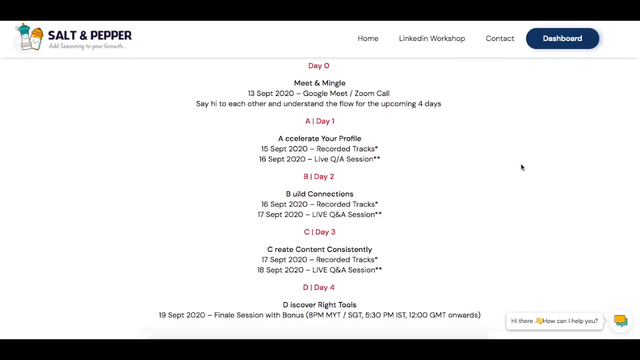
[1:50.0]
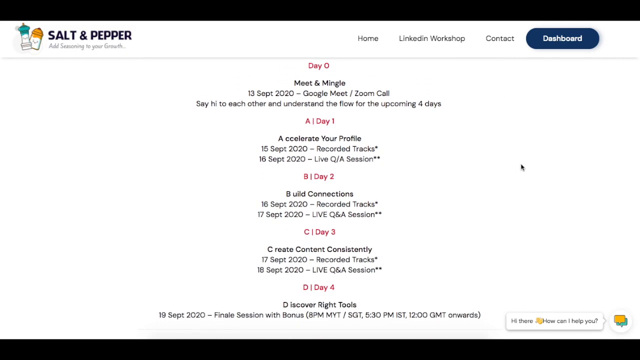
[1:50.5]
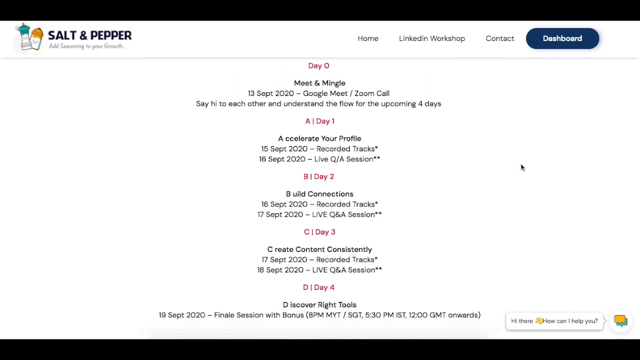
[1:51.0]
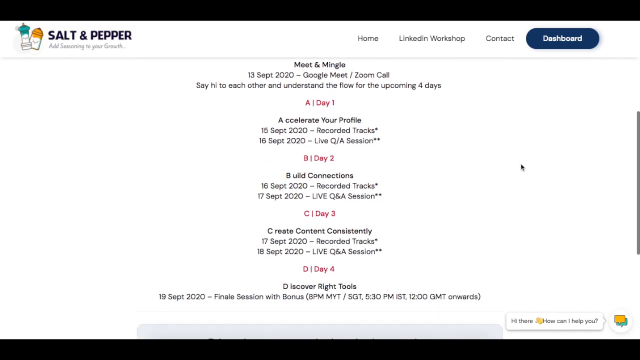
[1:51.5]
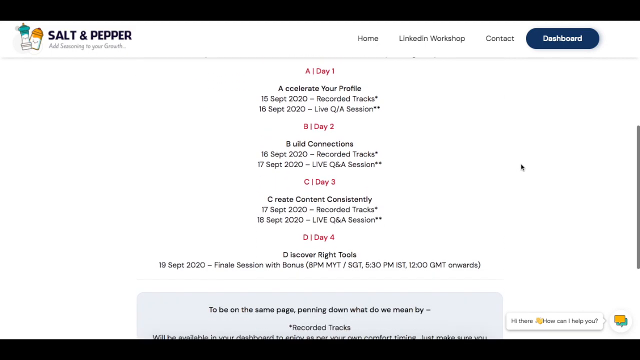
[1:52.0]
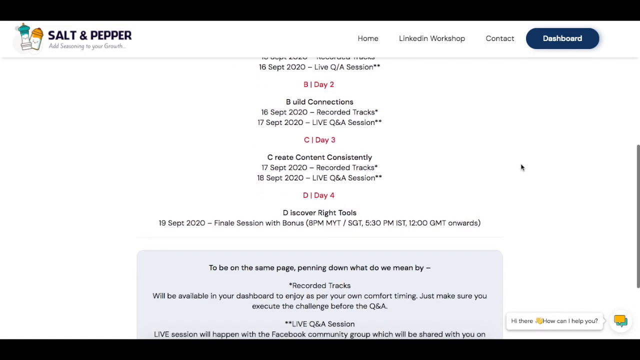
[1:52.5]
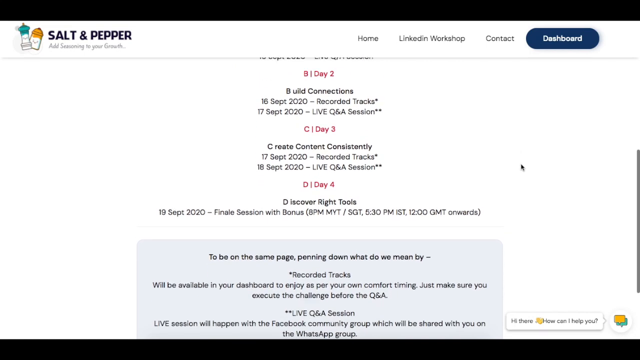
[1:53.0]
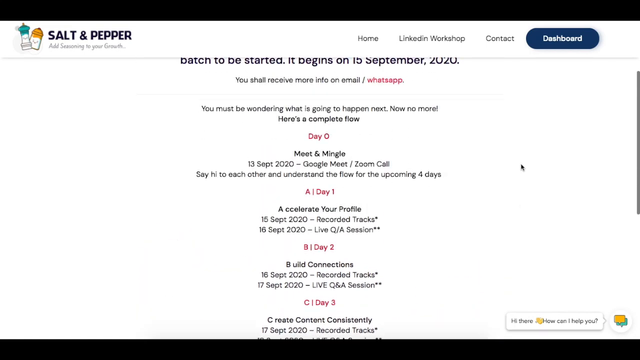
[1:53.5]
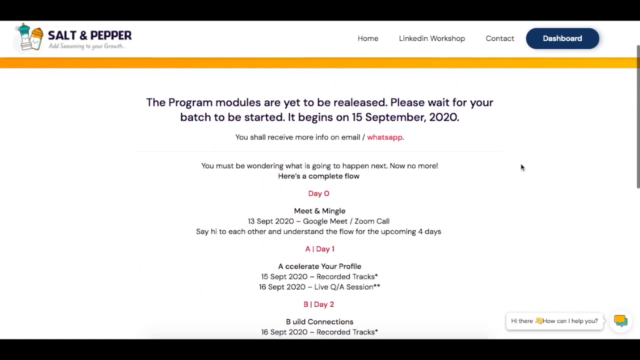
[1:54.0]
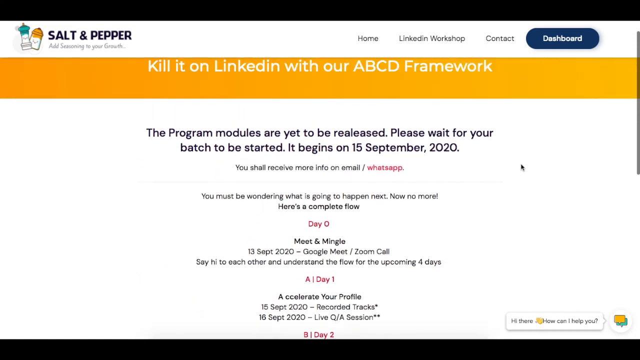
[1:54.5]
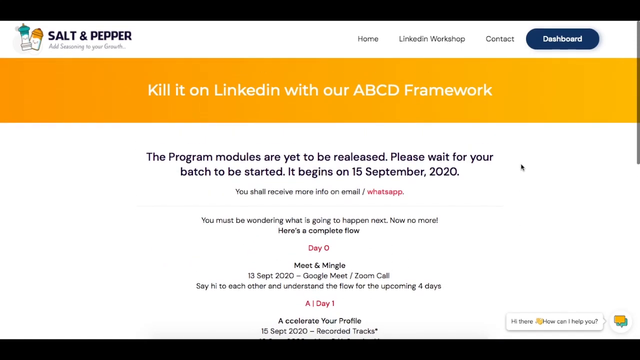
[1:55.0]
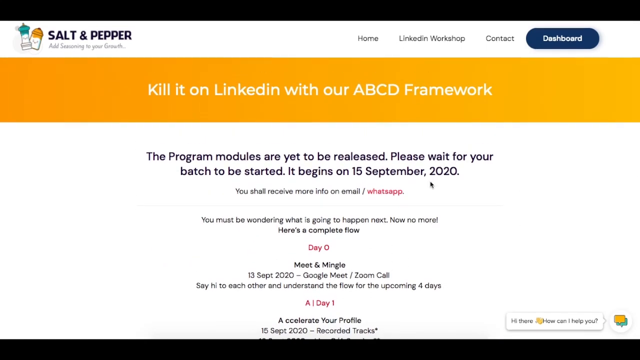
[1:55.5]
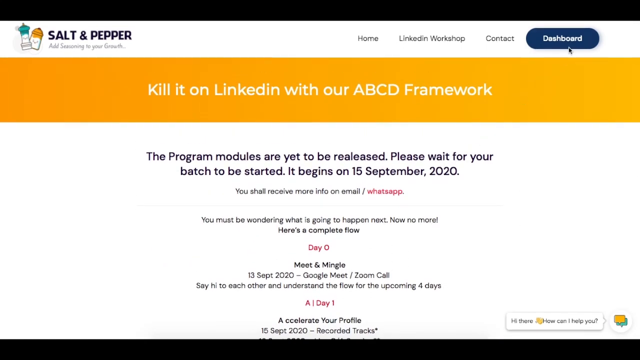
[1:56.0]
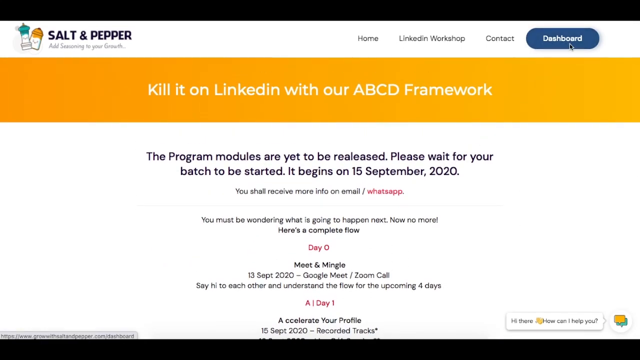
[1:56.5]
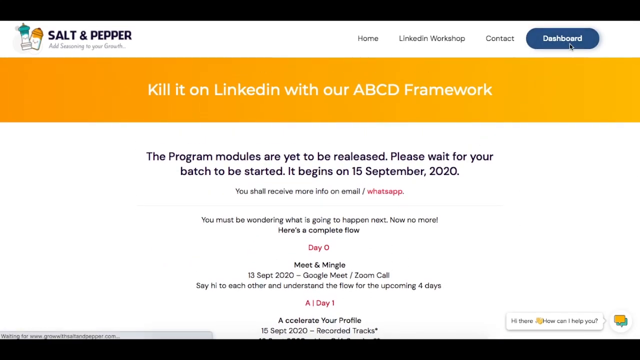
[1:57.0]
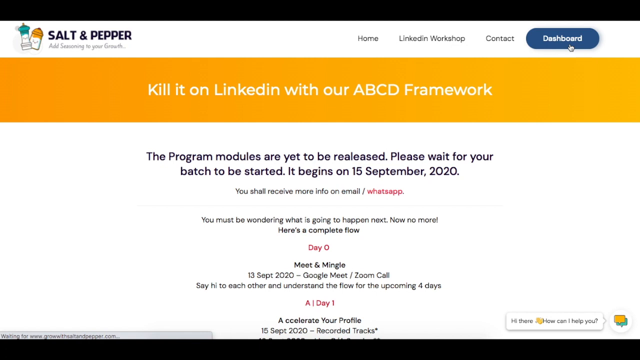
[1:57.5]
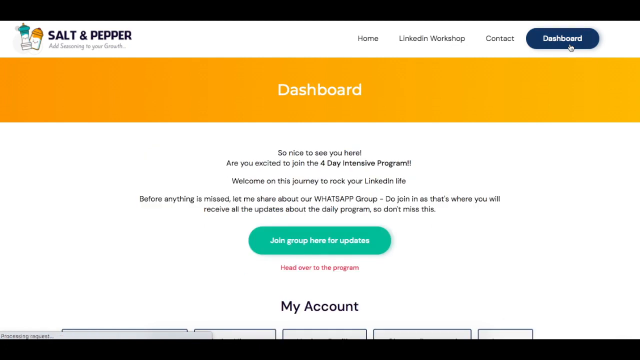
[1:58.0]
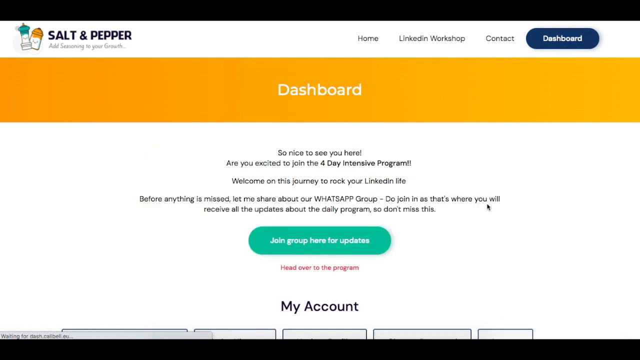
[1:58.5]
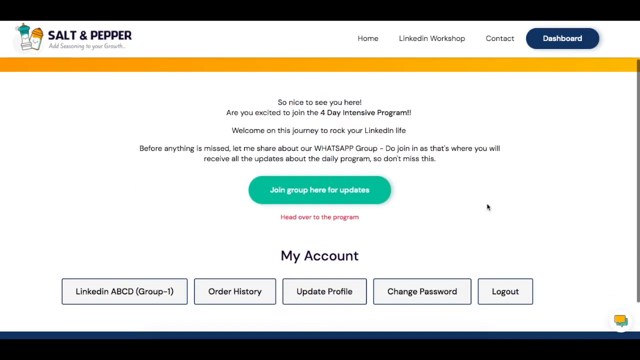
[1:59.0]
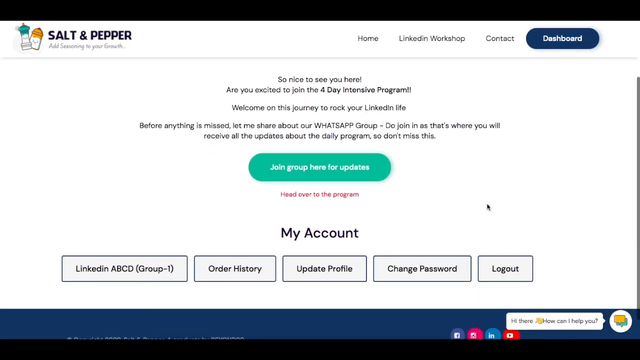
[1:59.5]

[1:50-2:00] The cursor quickly scrolls up and down the scheduled itinerary page, then scrolls back up to the top and briefly stops, showing the class landing page title. It moves to the very top right corner of the page and hovers over the blue, clickable dashboard button, then clicks it, which redirects back to the user's main dashboard page. The cursor scrolls to the bottom of the dashboard page, where the My Account title sits above the five clickable tabs, and then stops.